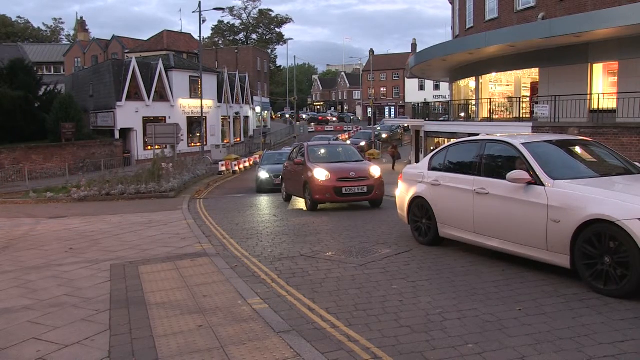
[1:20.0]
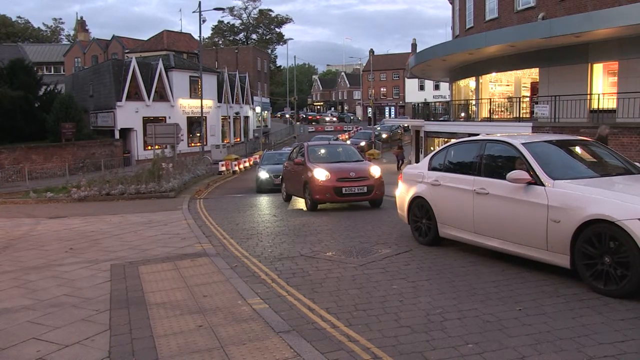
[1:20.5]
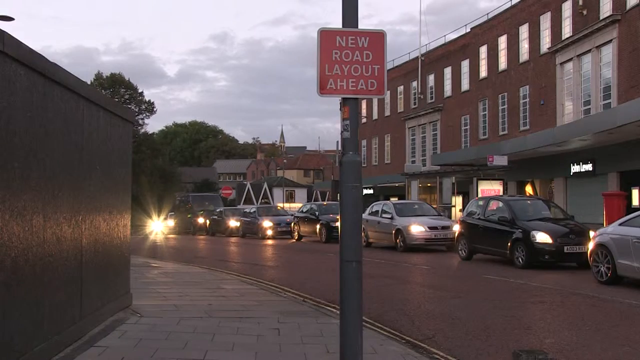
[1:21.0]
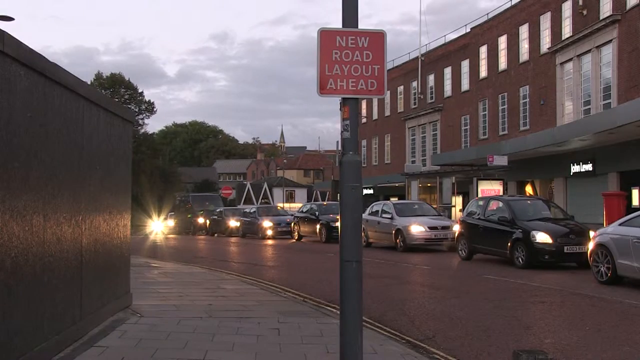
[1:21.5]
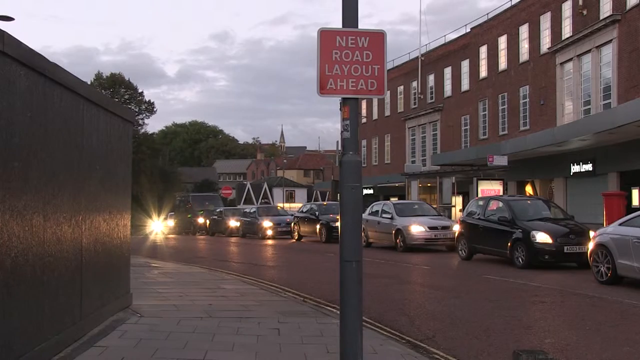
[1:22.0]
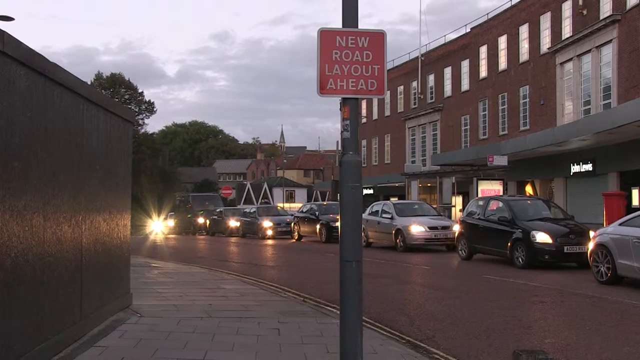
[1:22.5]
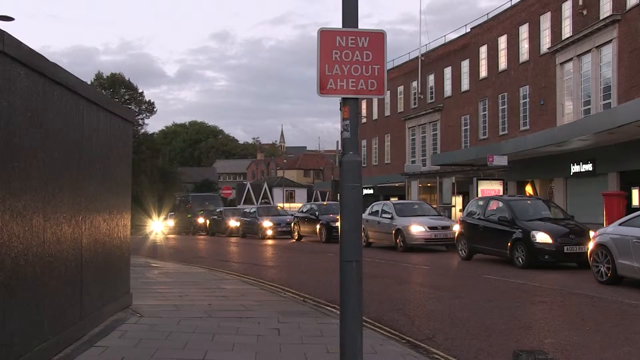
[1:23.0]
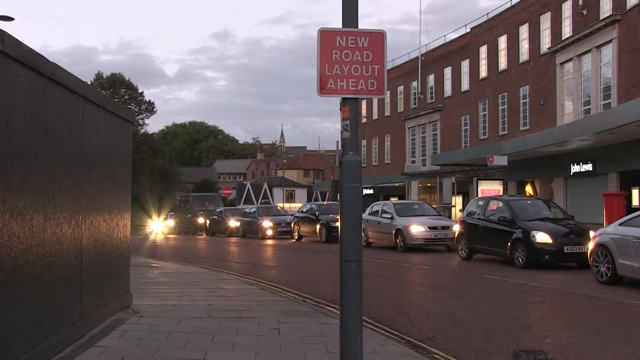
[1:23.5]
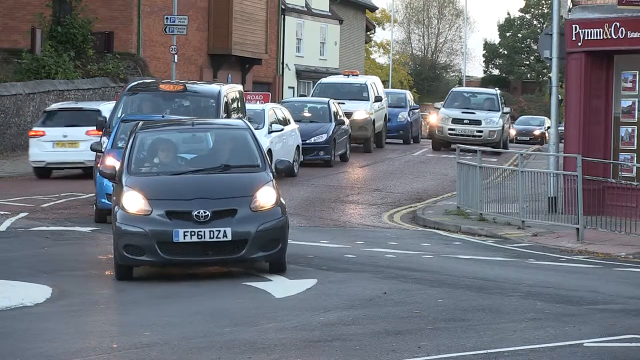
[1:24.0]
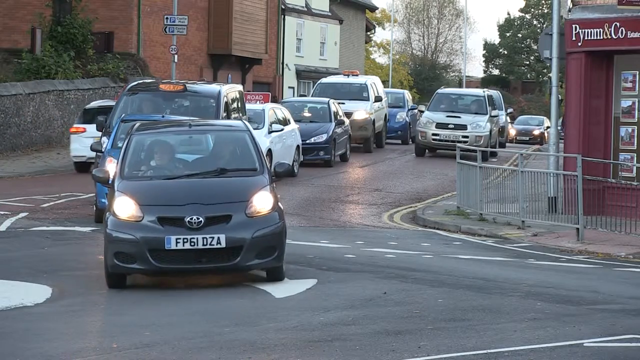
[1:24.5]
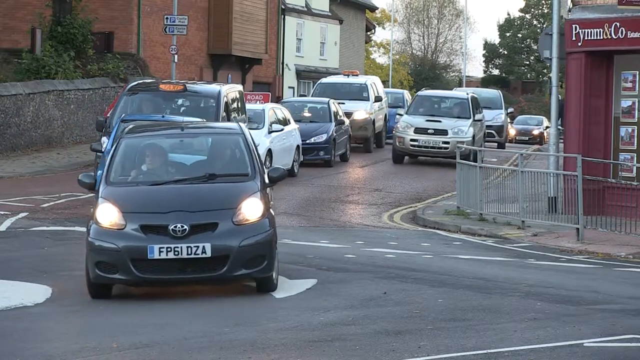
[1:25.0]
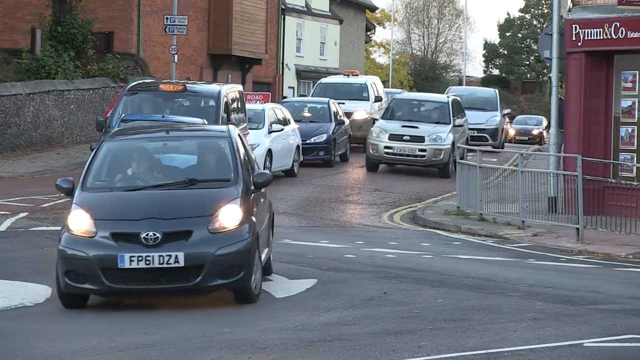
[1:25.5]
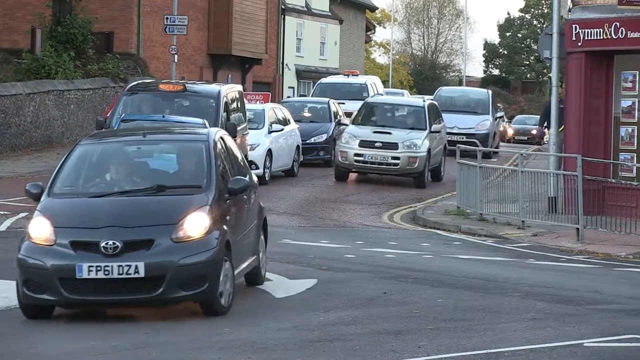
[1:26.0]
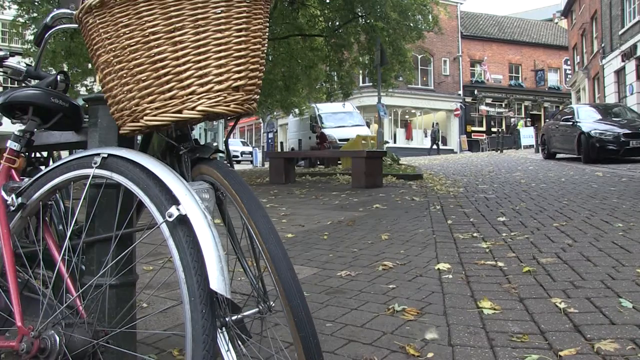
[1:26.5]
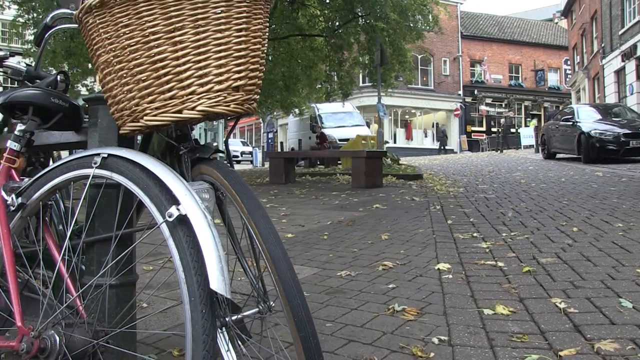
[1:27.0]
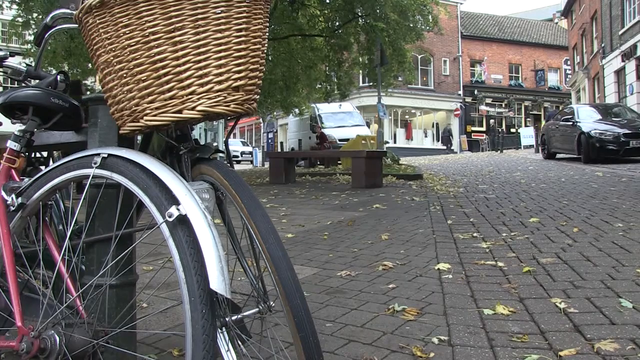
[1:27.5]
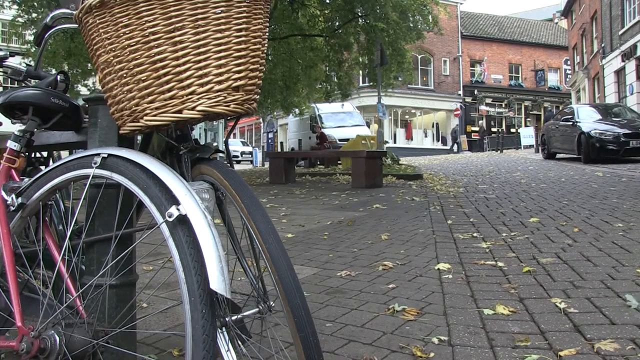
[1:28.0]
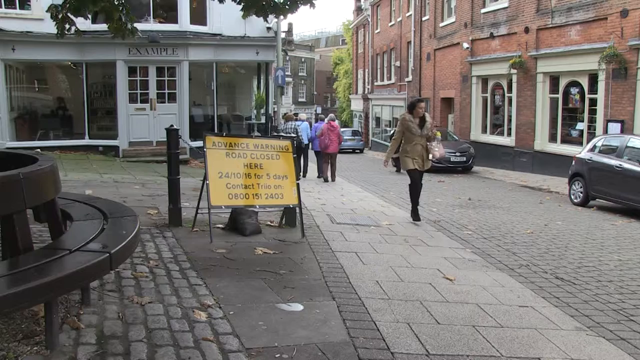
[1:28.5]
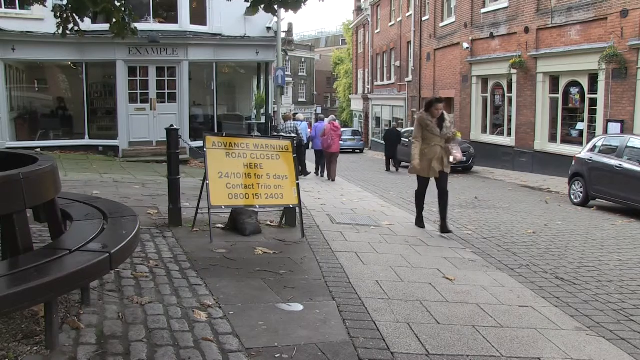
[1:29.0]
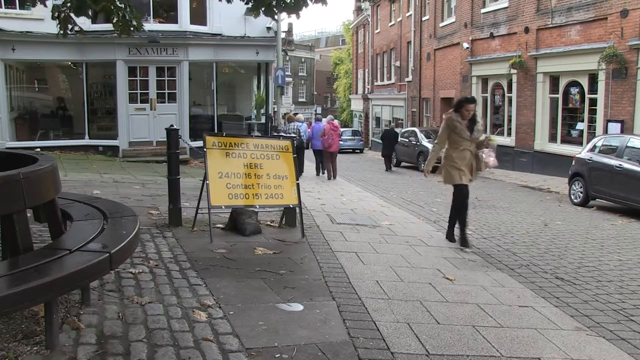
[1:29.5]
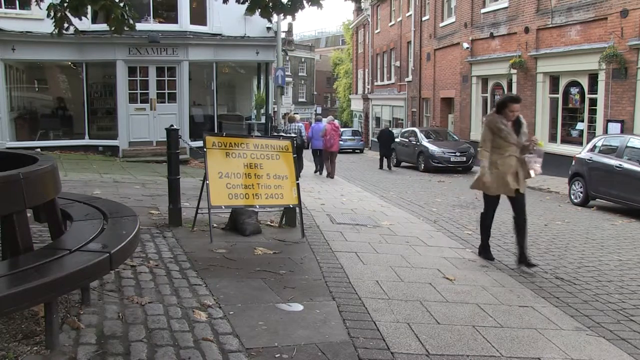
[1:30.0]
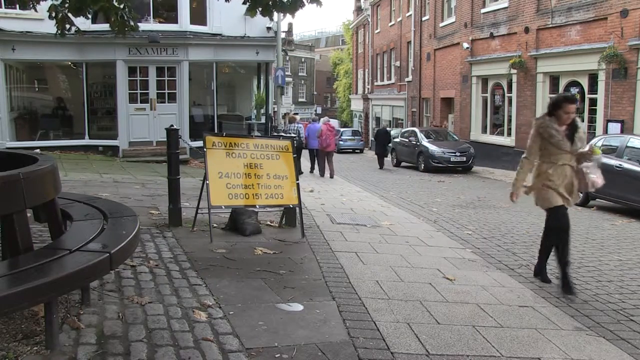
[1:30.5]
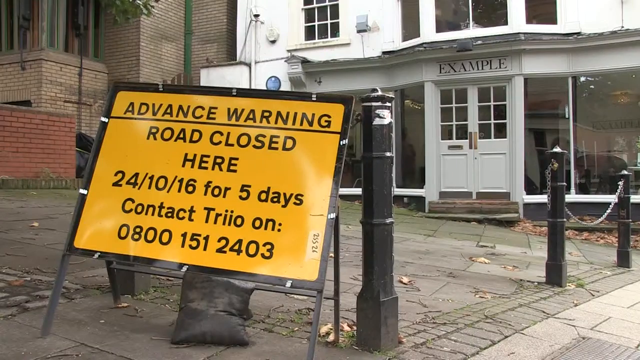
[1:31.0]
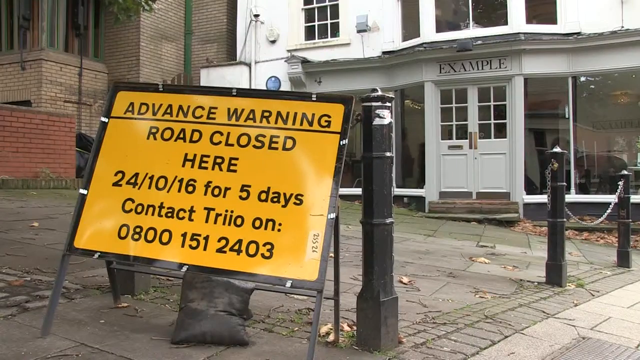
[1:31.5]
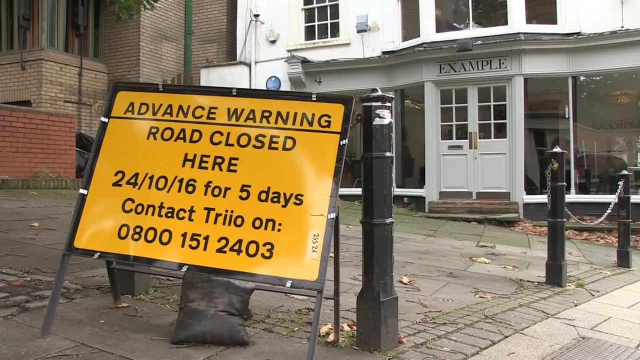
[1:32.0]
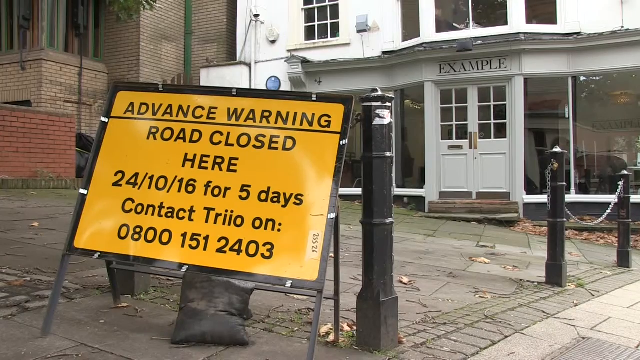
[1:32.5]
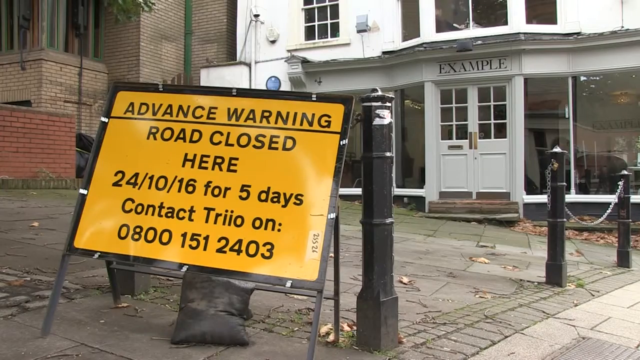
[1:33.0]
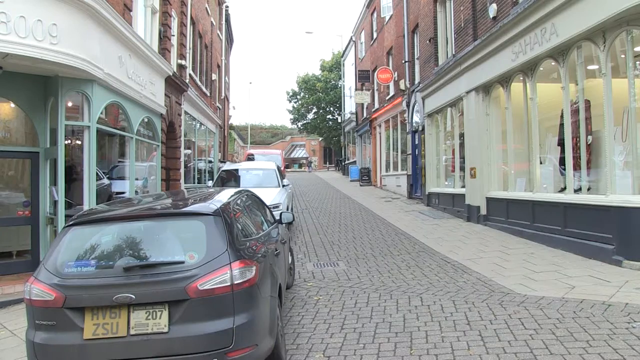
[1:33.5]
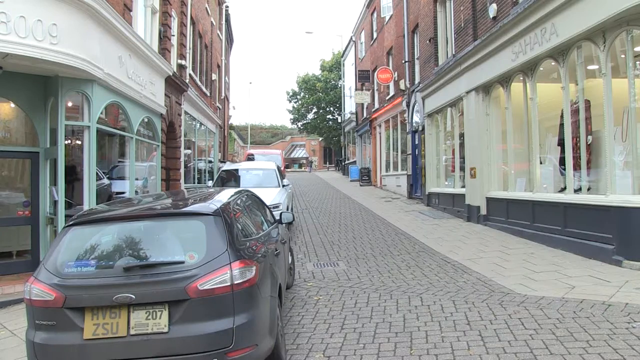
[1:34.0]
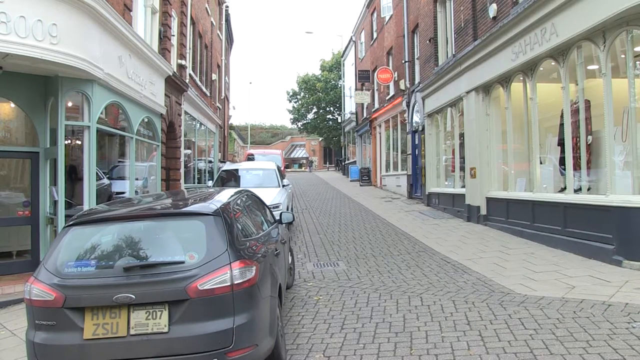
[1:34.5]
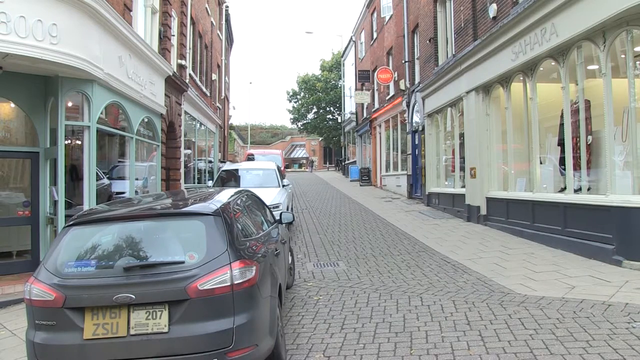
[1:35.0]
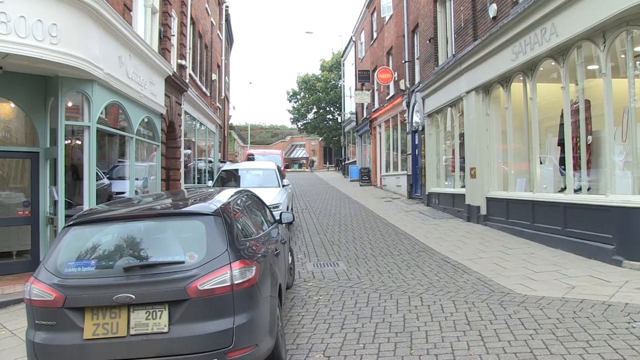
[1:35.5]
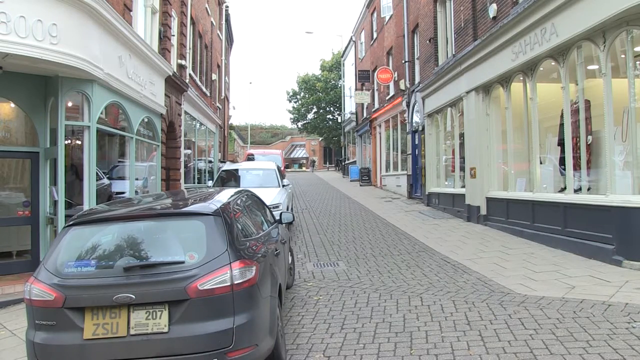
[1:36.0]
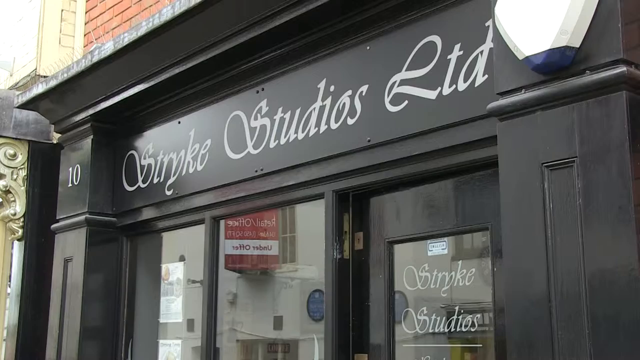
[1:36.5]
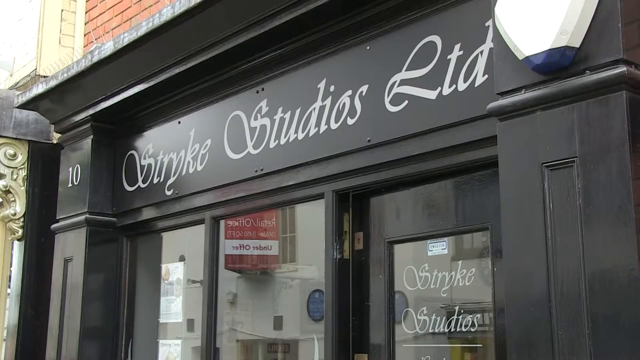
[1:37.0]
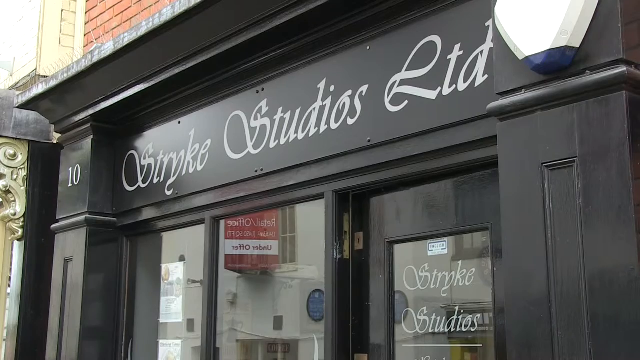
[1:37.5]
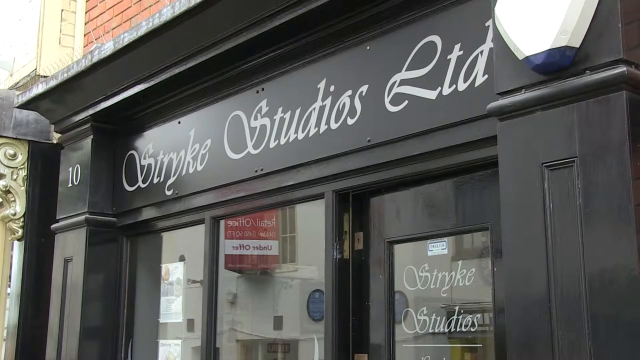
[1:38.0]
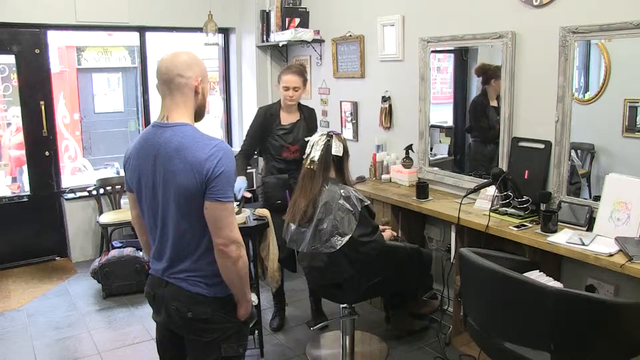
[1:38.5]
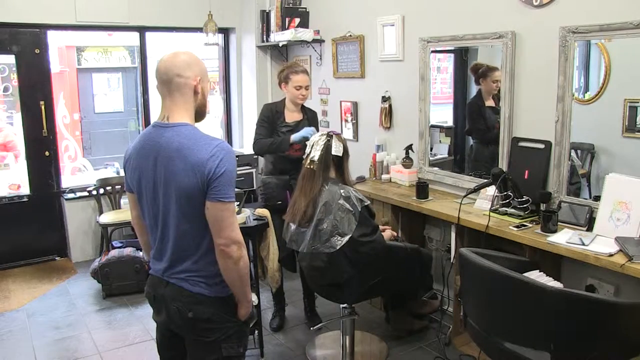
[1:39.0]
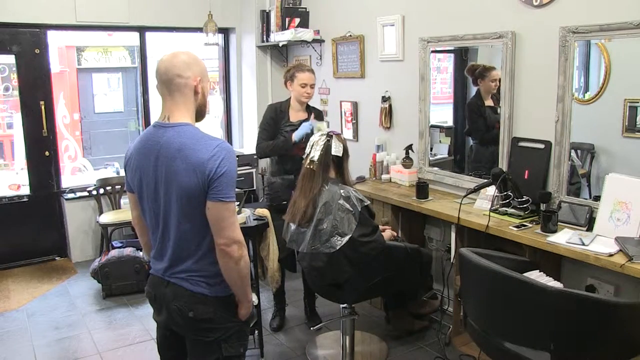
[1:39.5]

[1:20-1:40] The convoy and traffic continue. In the next scene it is early evening and the cars' lights are on as it becomes darker. A "new road layout ahead" traffic sign is visible, and cars try to navigate in different areas. Buildings are shown, with bicycles parked on the side of the road and people moving around freely. Another road sign, written in black on yellow, warns "Road closed here" "for five days" and gives the contact number "0800-151-240". The camera pans back to buildings along the side of the road, including a shop labelled "Strike Studios Ltd". The scene moves into a beauty salon where three people appear: a man and two women. A woman is seated while her hair is being coloured, and the man wears a blue shirt.